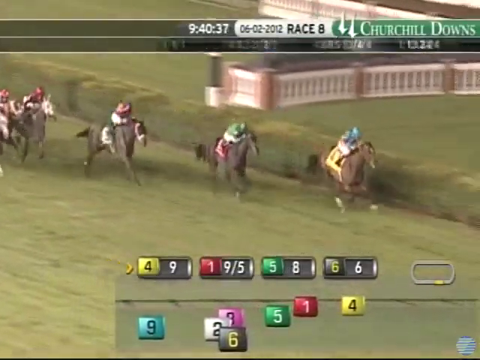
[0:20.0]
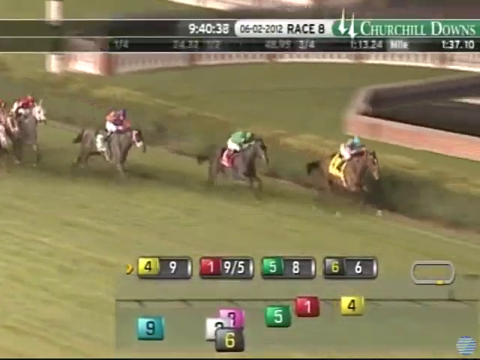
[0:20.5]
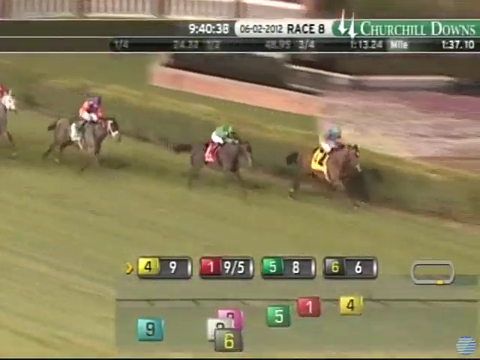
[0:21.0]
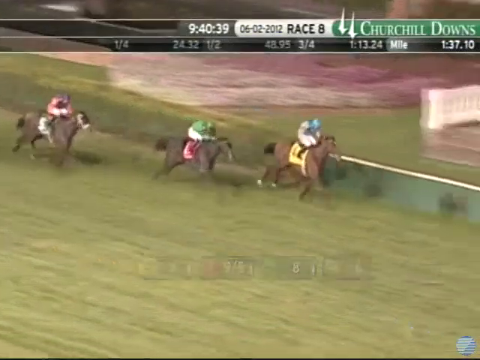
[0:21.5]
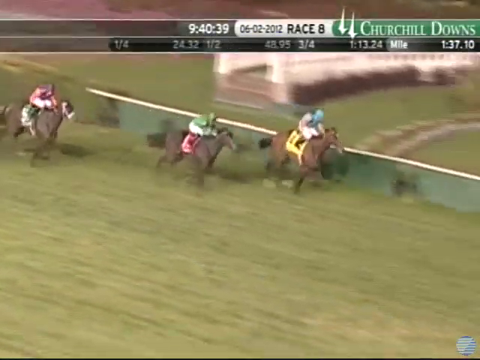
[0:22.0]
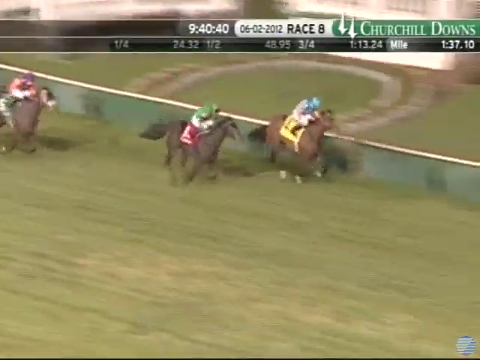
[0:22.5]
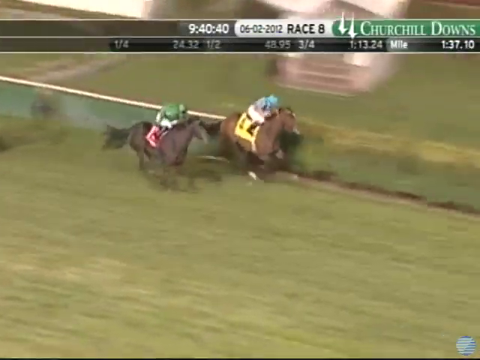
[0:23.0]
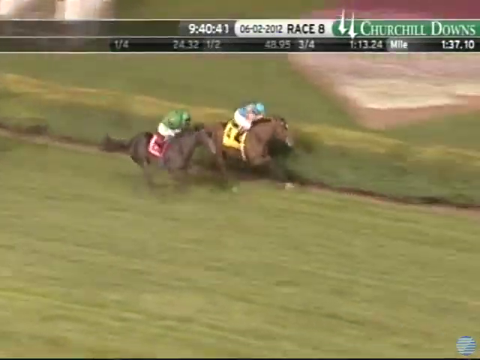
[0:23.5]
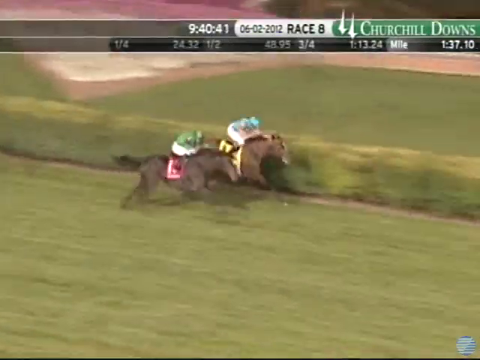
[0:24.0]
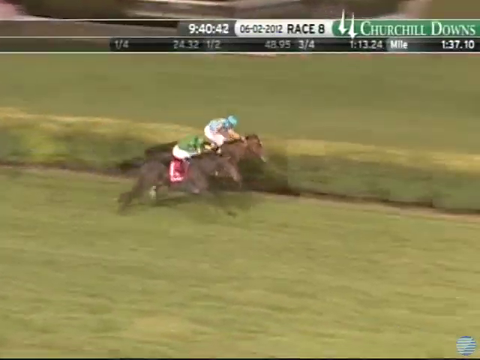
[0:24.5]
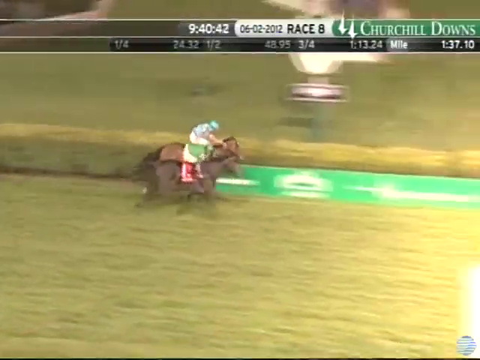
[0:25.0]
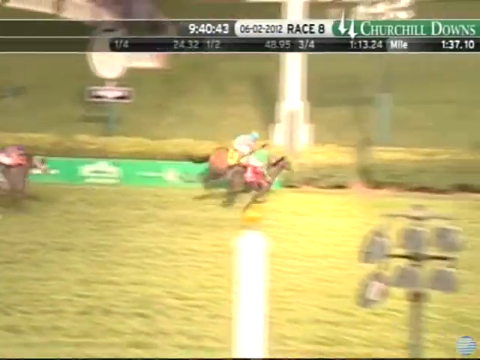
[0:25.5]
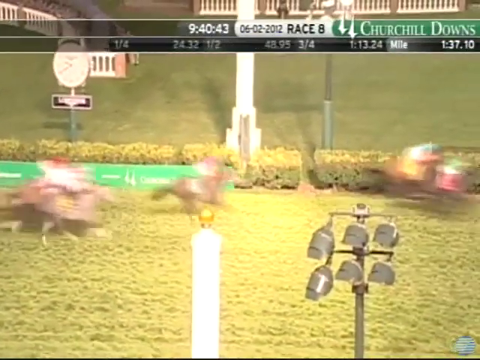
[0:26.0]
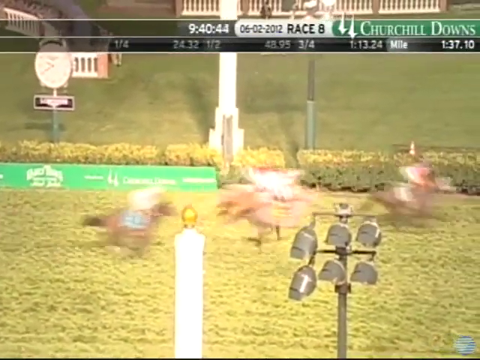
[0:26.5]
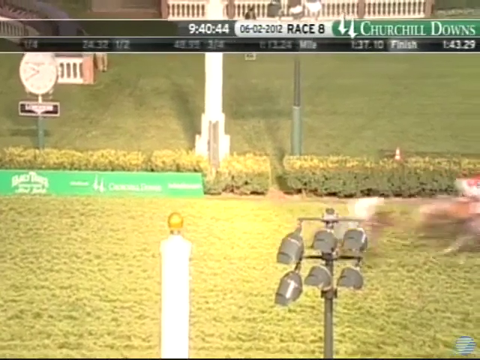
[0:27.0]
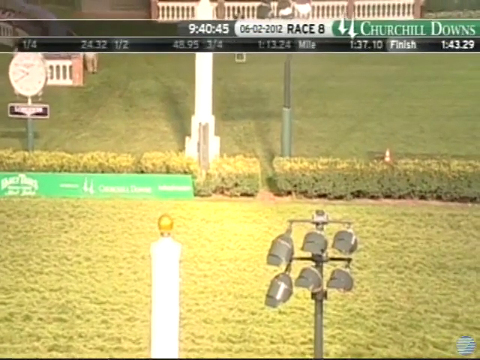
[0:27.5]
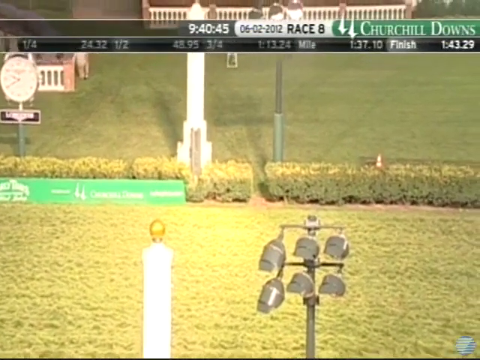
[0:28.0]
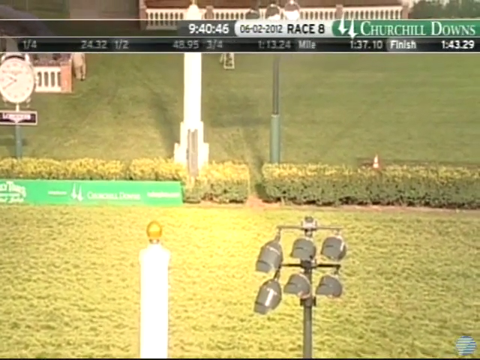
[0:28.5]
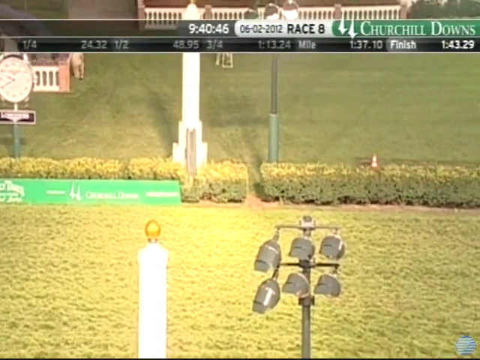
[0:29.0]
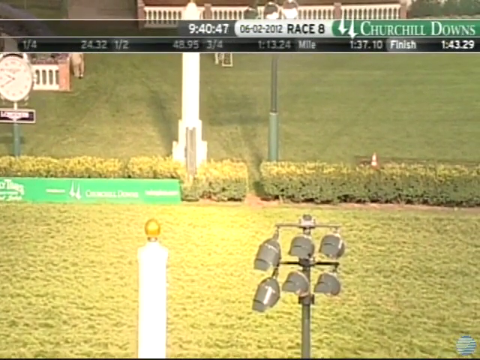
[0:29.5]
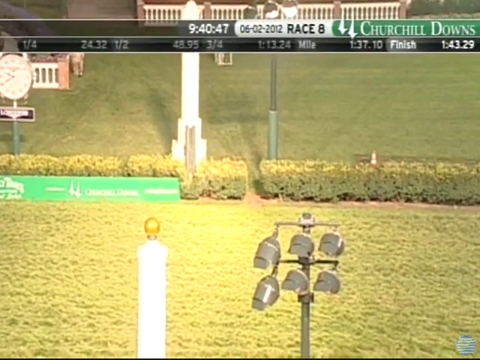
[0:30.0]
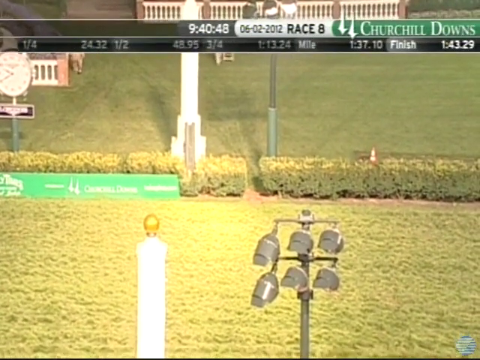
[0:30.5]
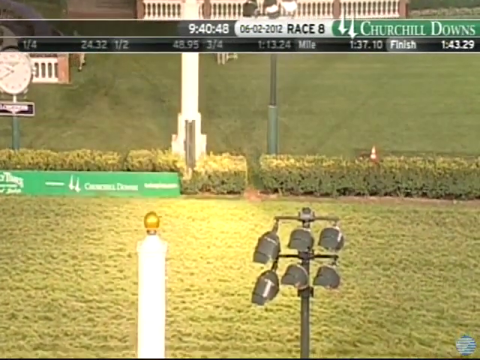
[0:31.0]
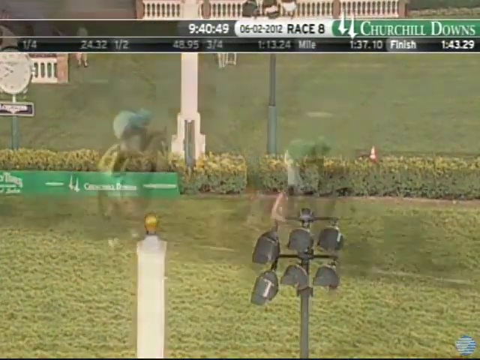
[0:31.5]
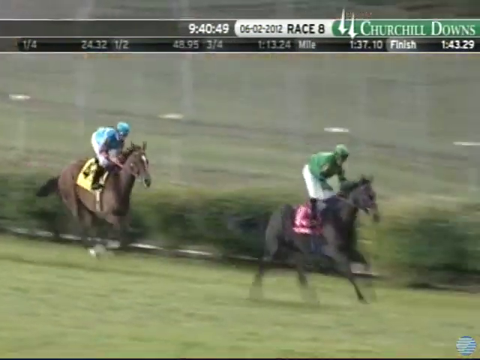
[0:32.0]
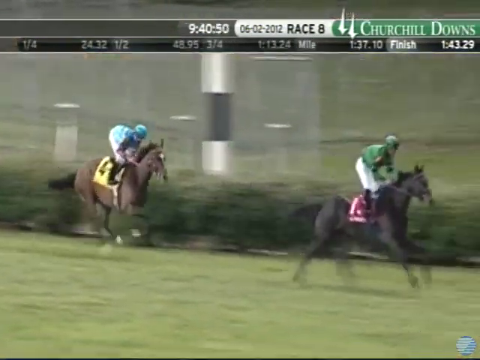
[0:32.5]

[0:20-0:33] As the race nears its end, two horses run very, very close together, sprinting at the very end in what may be a photo finish. It looks like number 1 may have finished in the lead, followed by number 4, apparently after a little comeback, though this is not certain. The video ends on the finish of the race with a couple of horses running.